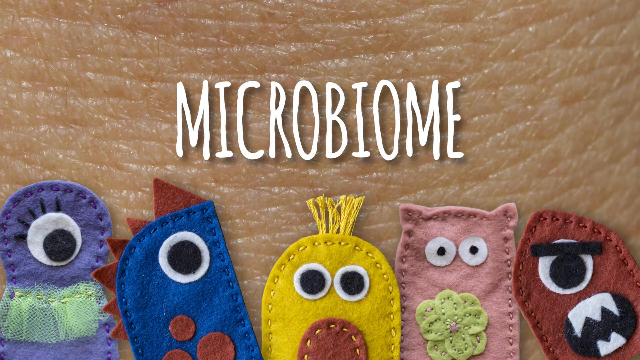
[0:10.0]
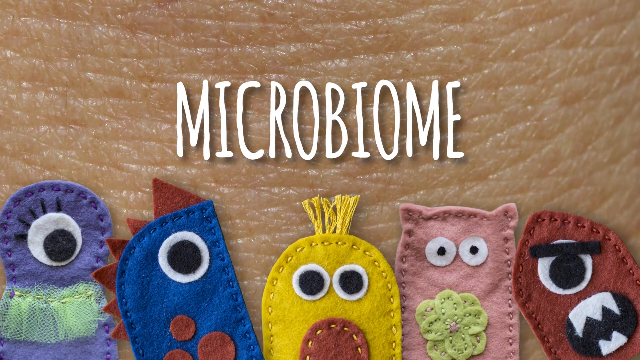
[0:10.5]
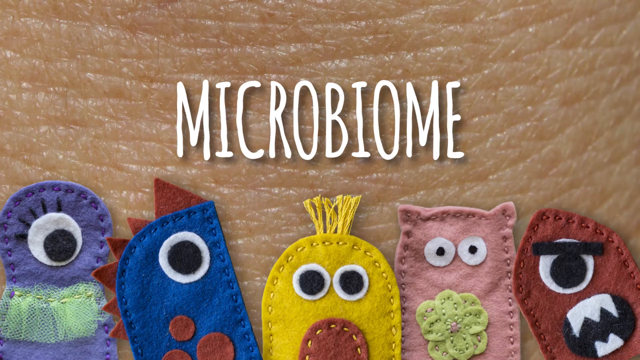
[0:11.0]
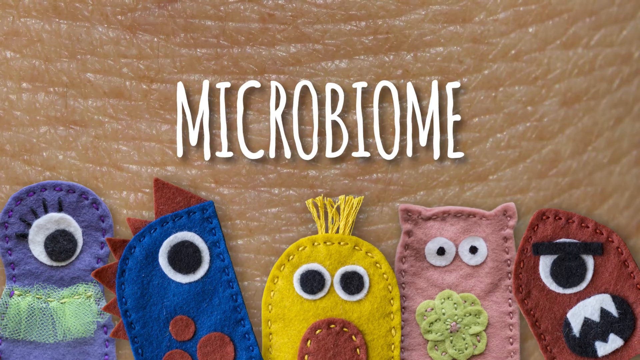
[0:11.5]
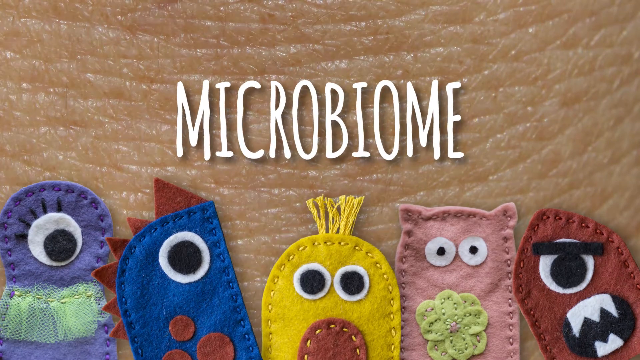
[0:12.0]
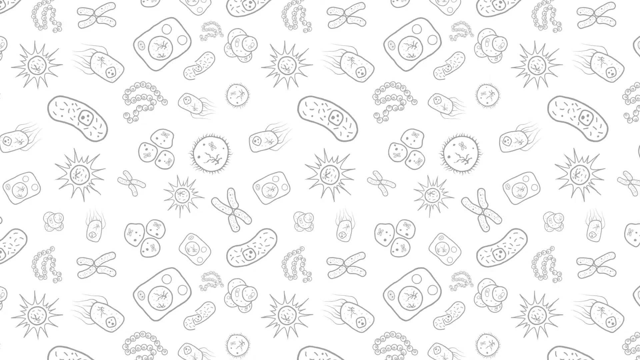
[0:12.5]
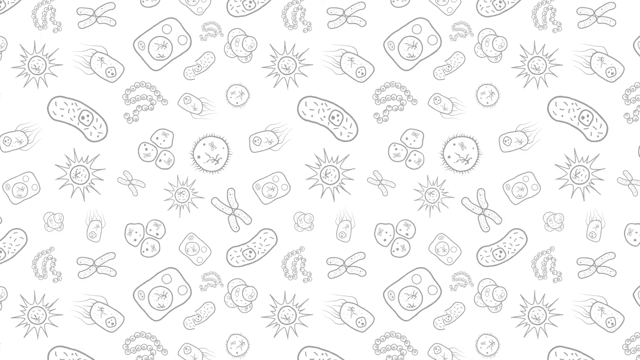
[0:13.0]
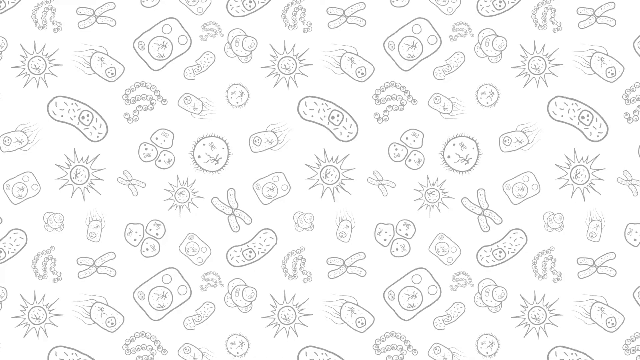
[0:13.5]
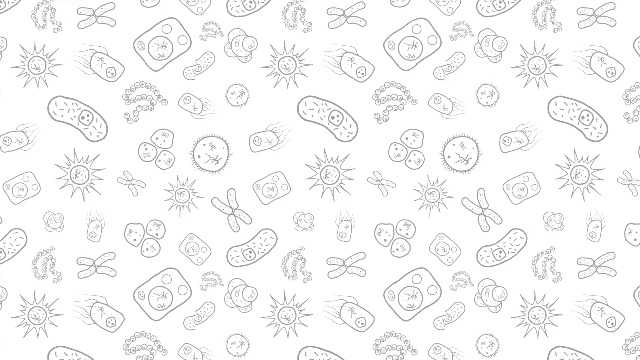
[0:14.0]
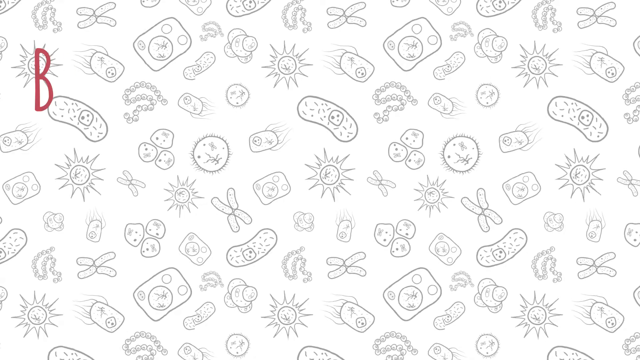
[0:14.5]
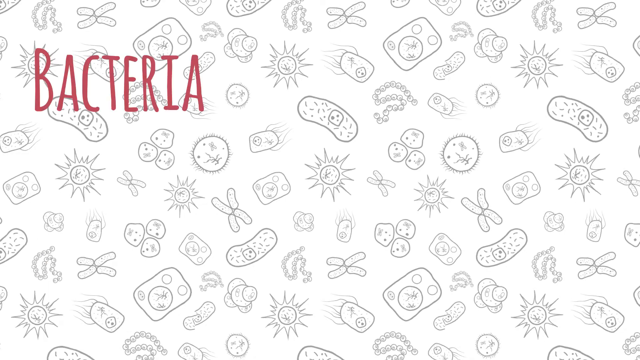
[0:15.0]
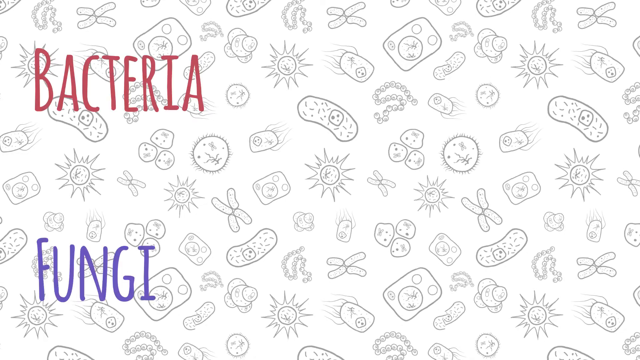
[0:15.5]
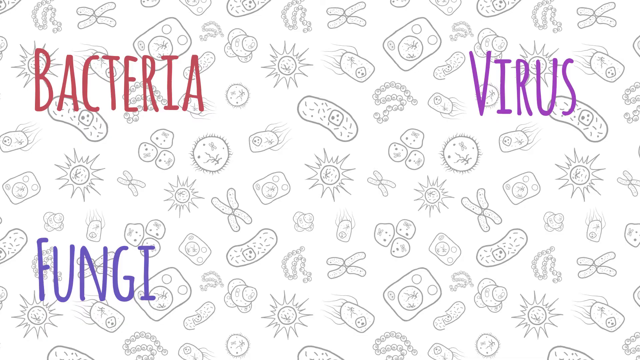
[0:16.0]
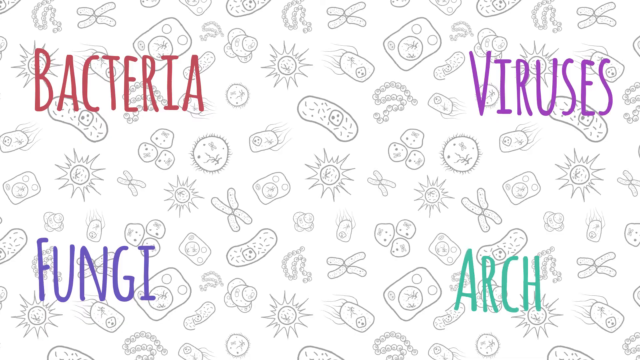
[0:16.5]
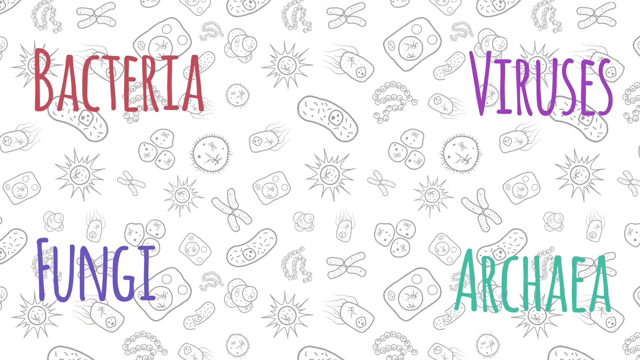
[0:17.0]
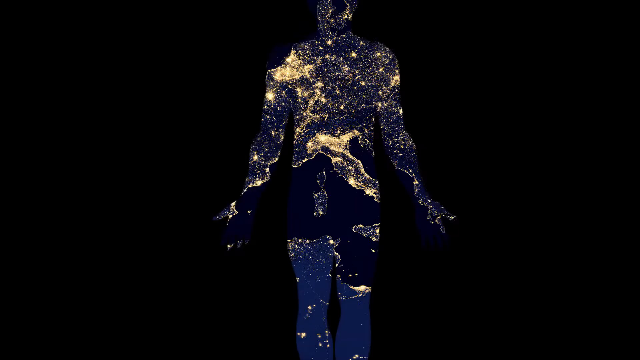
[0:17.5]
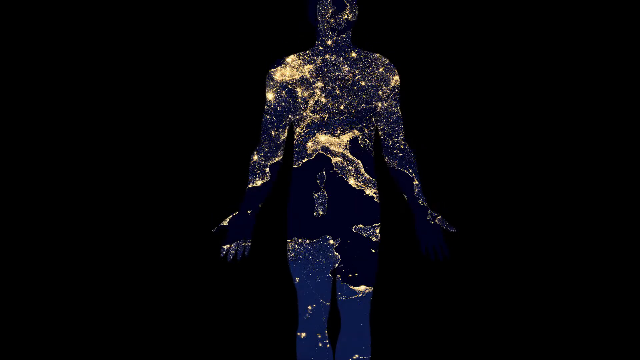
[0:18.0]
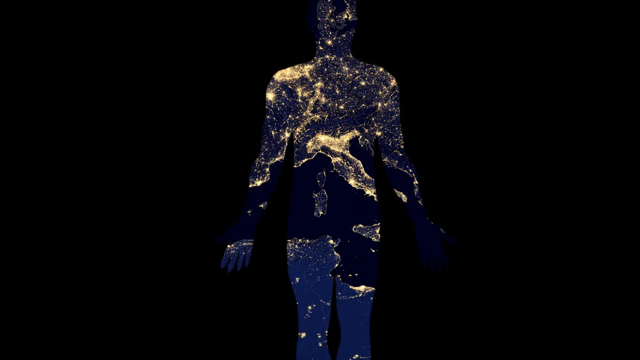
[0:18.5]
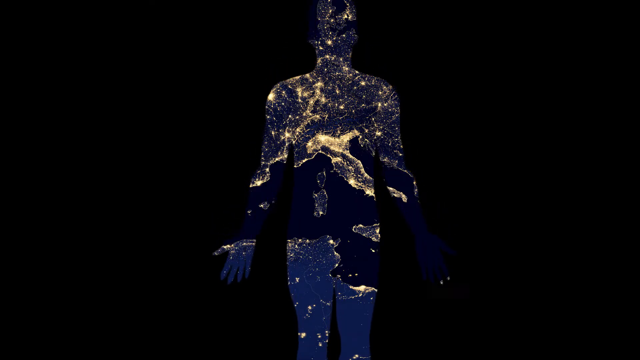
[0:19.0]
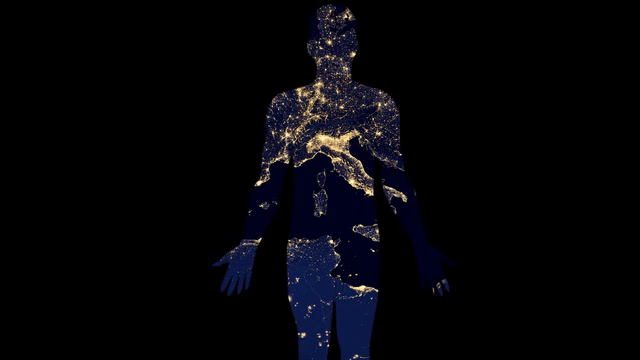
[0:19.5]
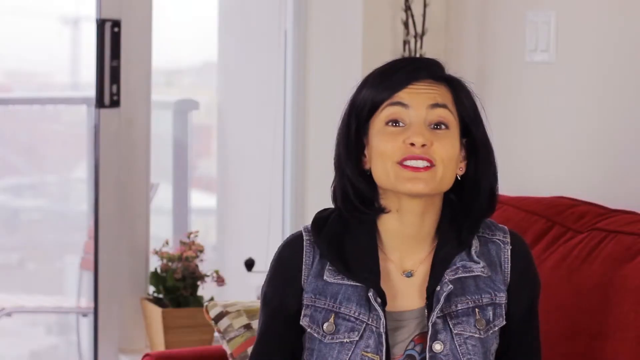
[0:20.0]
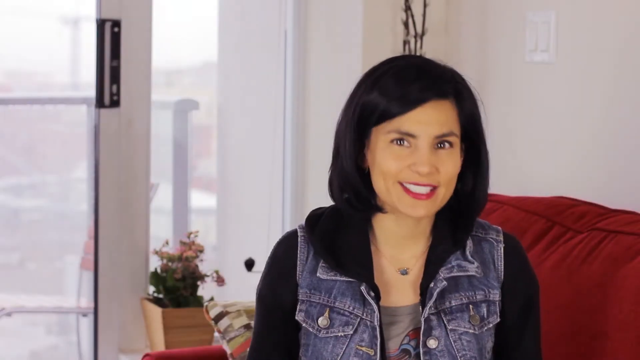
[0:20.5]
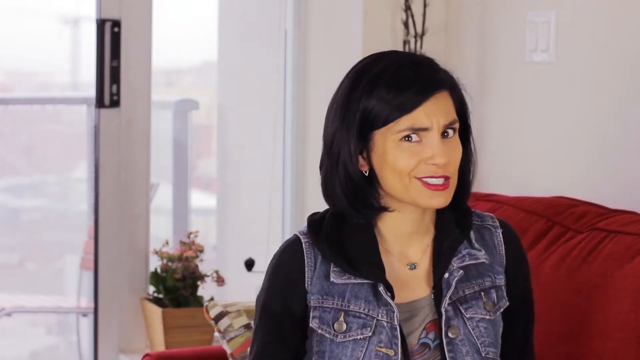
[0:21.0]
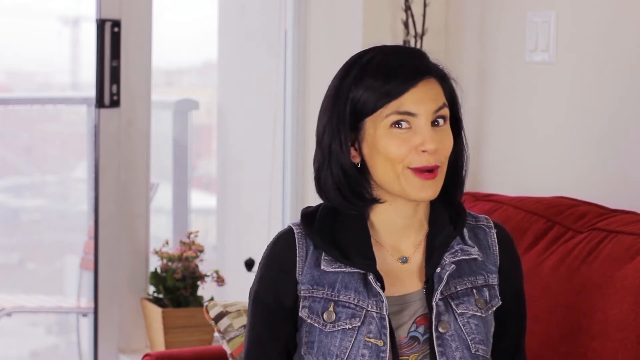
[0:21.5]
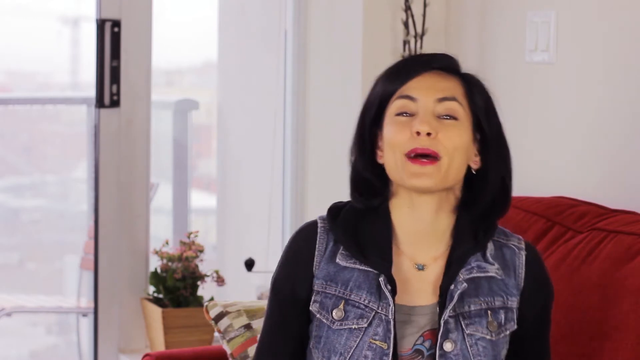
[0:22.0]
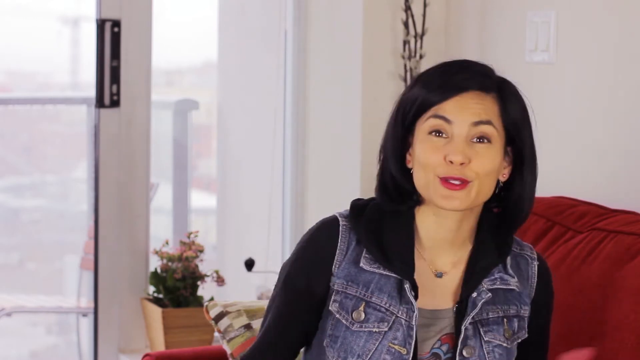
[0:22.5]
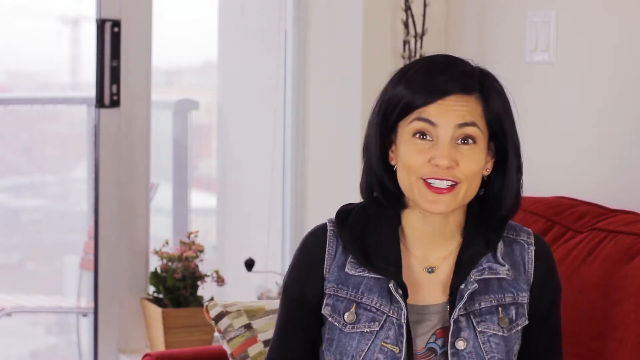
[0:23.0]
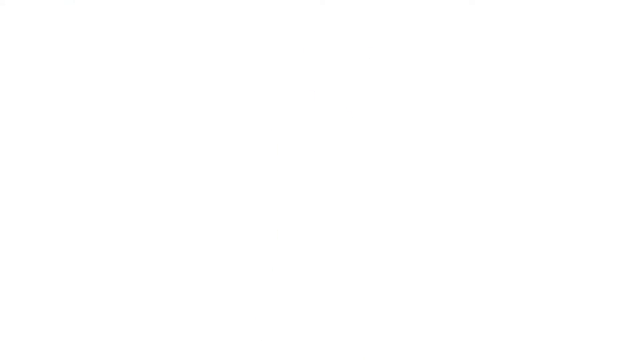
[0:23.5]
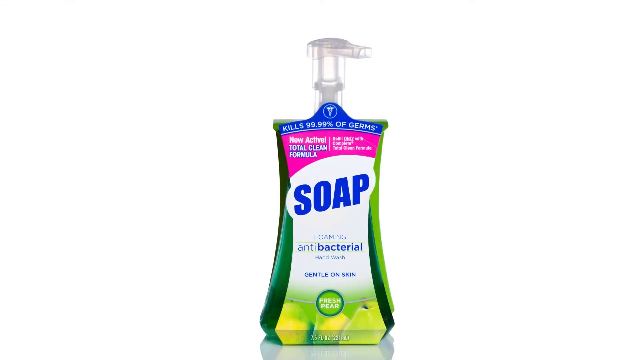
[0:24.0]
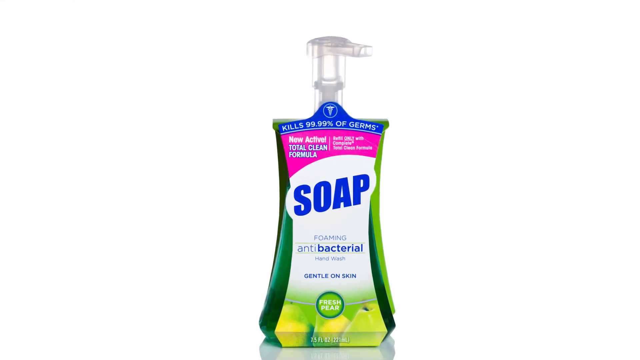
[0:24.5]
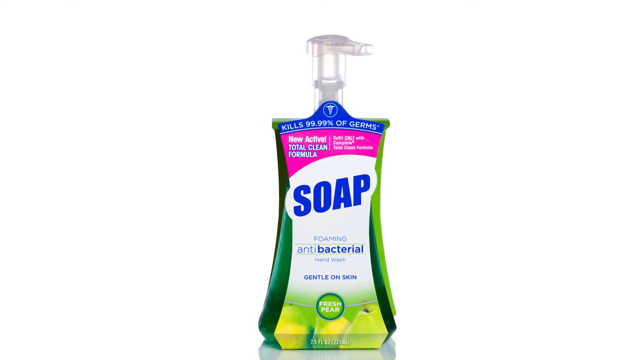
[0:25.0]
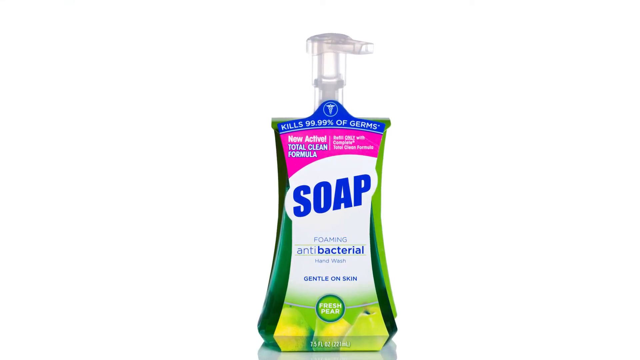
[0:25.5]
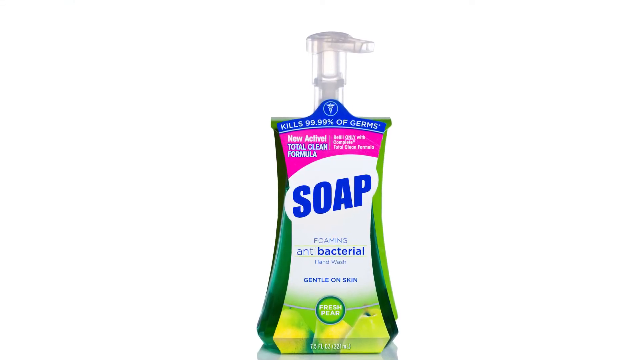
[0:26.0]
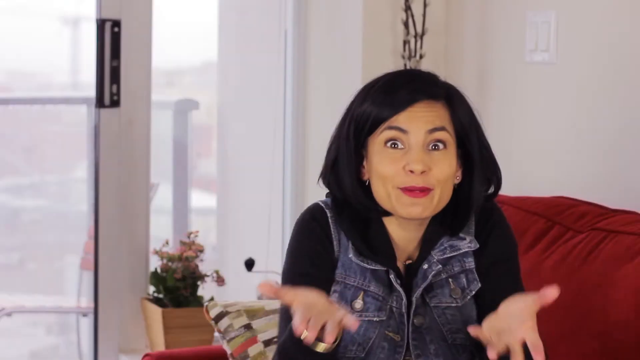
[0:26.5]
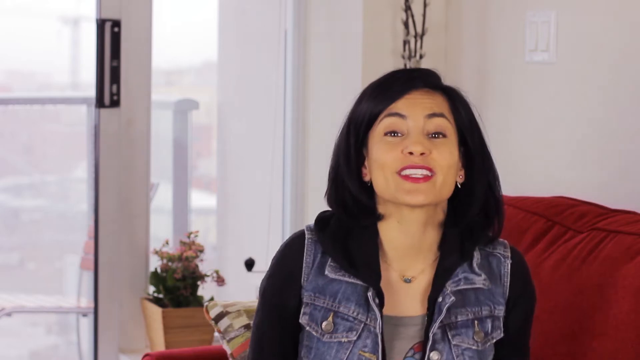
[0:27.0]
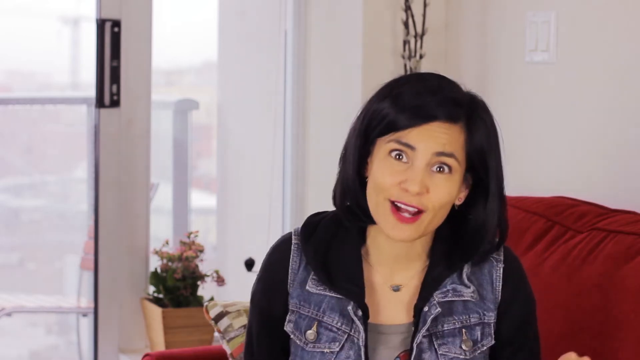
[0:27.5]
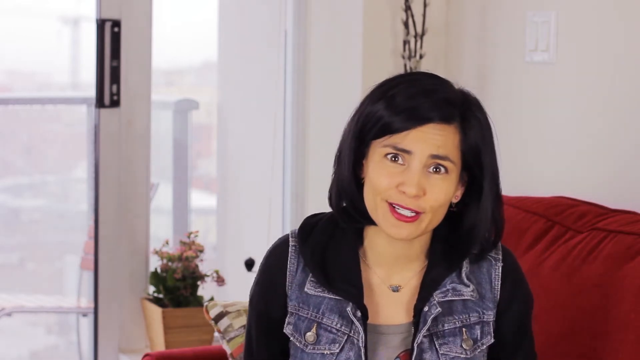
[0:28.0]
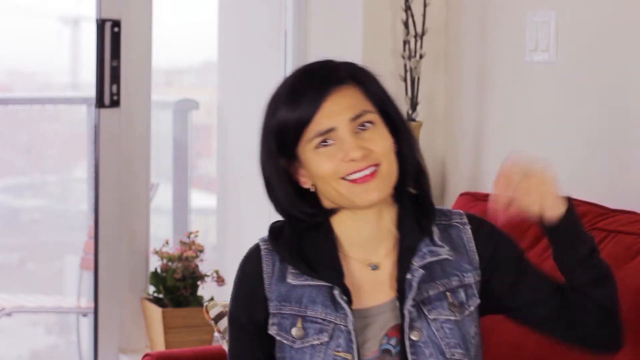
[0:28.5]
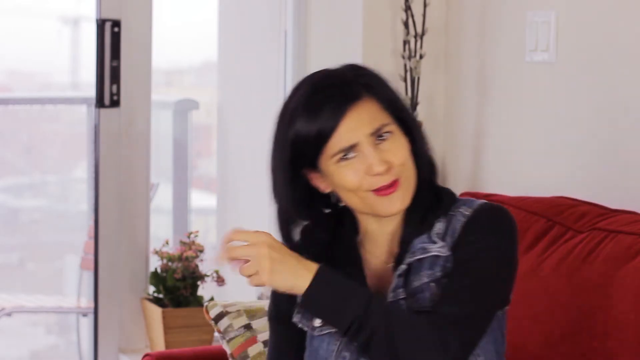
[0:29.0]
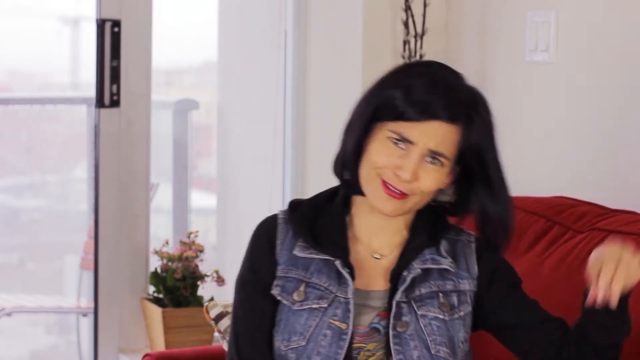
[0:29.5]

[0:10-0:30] Over the visual background, the title "Mycobiome" appears, and below it illustrated figures pop up. On the left is a purple illustration that might be female, with eyelashes. On the right is one that looks like a chicken, in red. There is a yellow one with two eyes, a pink one with two eyes and a green sunflower mouth, and a red one that seems angry, with sharp teeth, its mouth moving right and left. On-screen text reads "bacterial viruses, fungi and archaea", followed by a shot of what looks like a disgusting illustration of a graffiti wall. Another shot shows a black background with a human, then the human's body. The video cuts to a woman sitting down on a red couch, then an image of sunlight, and returns to the woman.